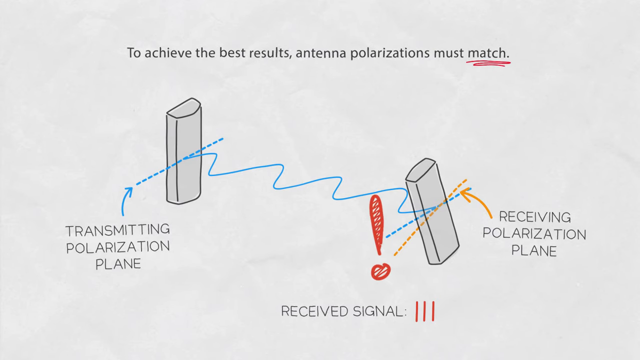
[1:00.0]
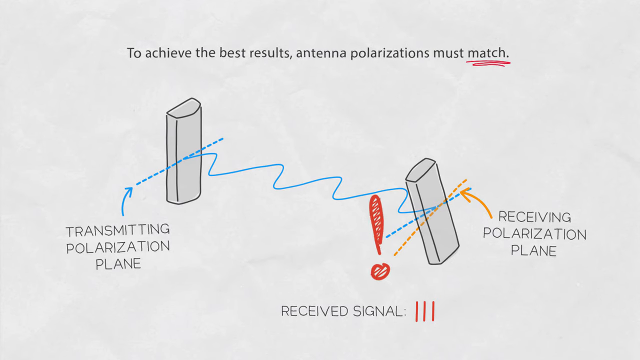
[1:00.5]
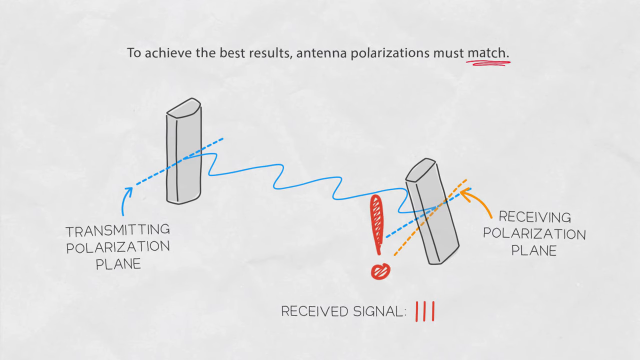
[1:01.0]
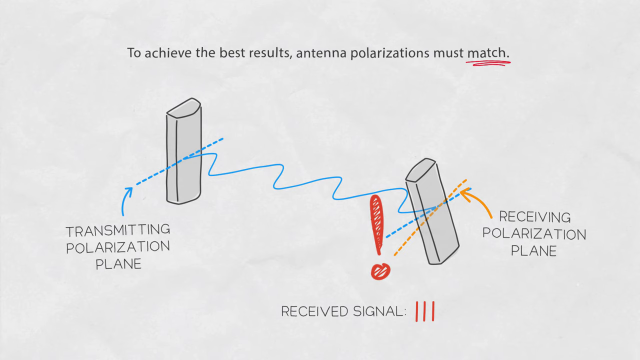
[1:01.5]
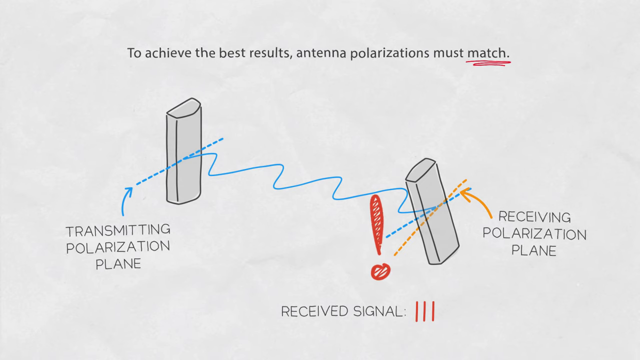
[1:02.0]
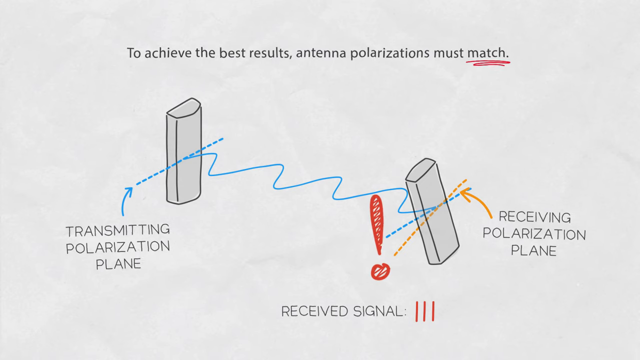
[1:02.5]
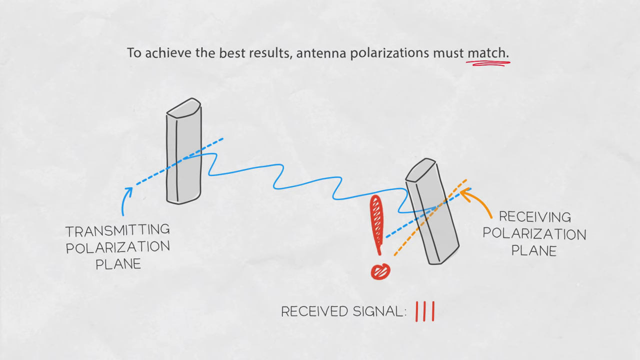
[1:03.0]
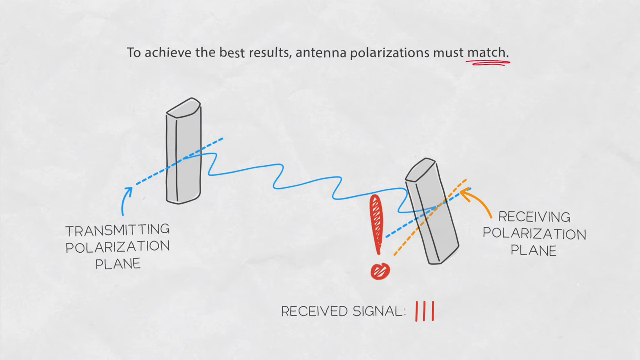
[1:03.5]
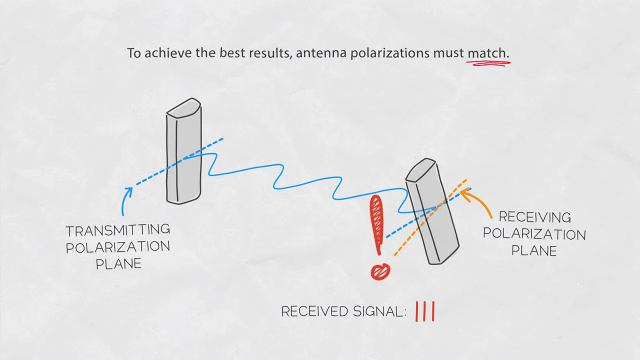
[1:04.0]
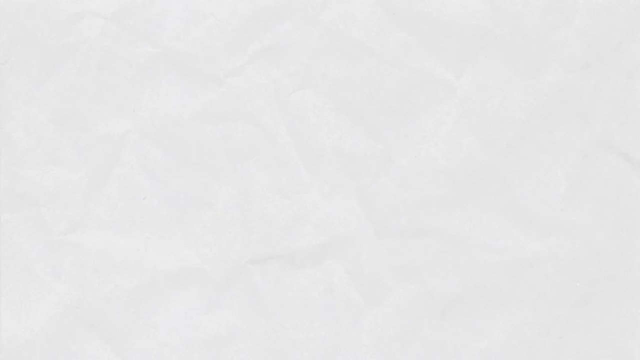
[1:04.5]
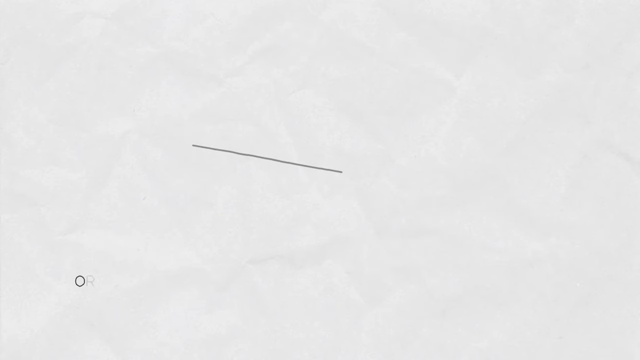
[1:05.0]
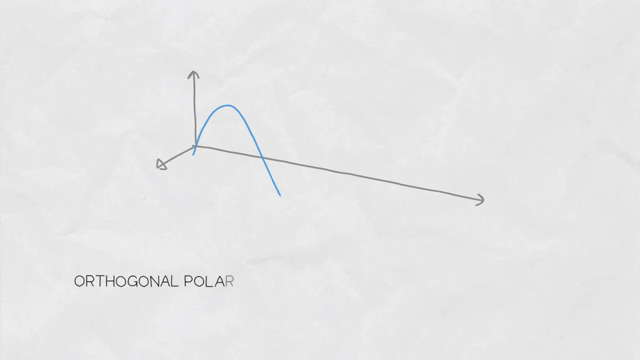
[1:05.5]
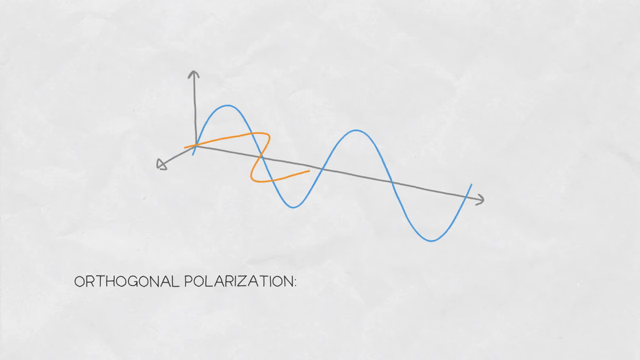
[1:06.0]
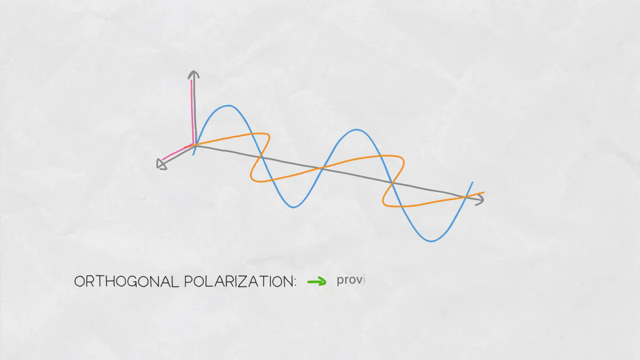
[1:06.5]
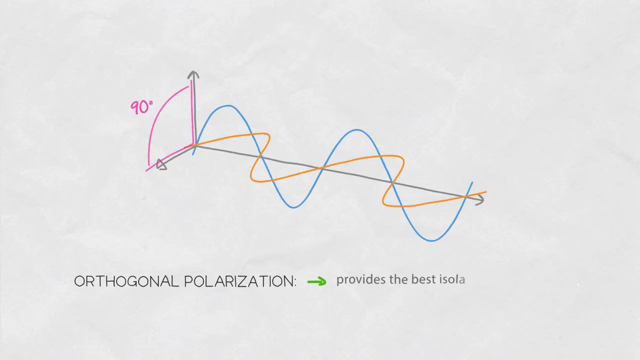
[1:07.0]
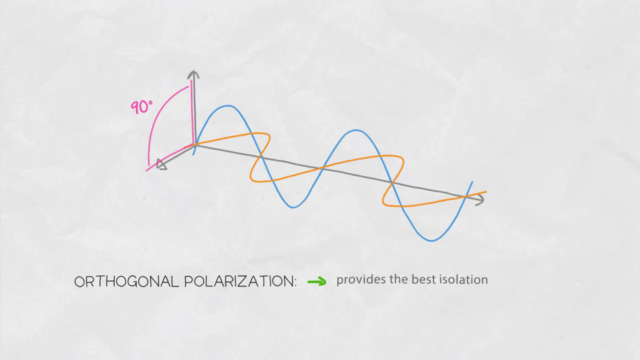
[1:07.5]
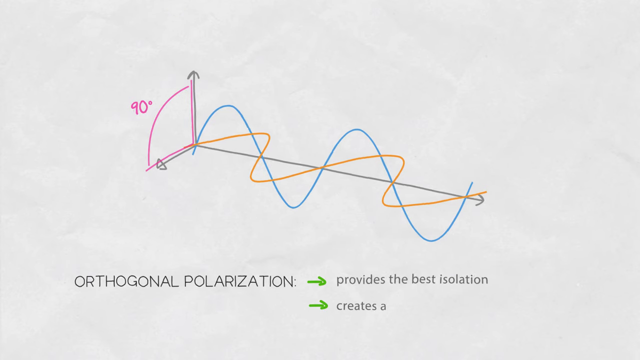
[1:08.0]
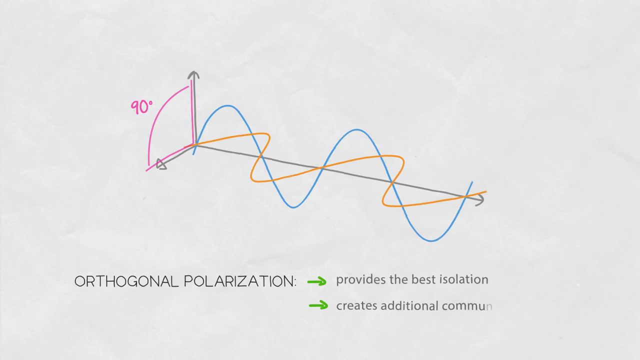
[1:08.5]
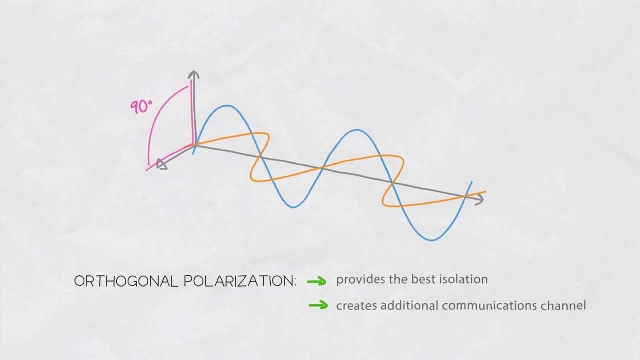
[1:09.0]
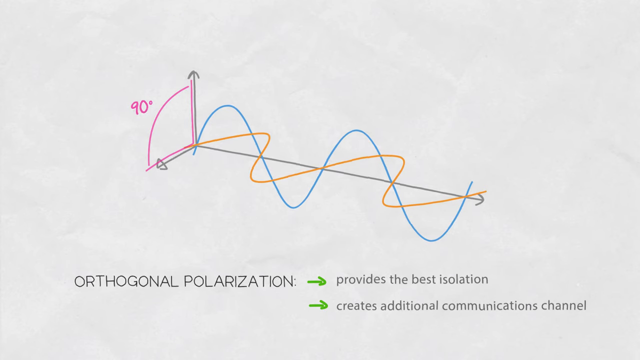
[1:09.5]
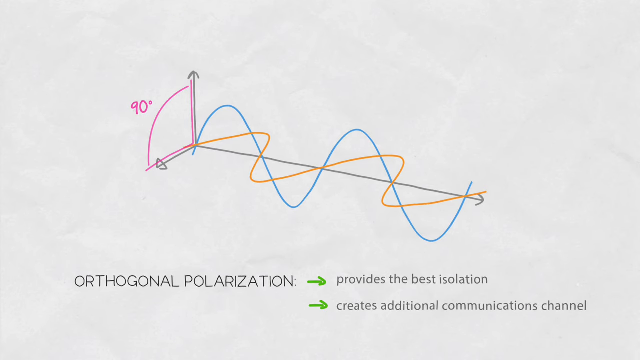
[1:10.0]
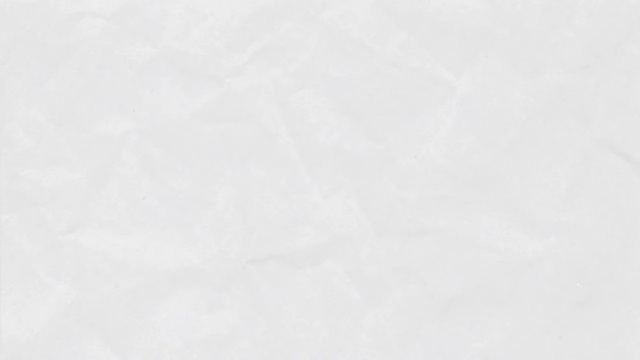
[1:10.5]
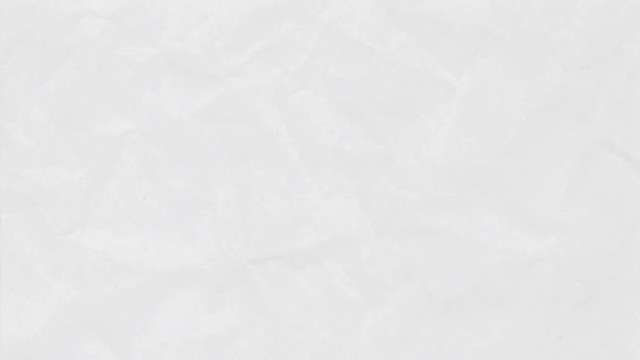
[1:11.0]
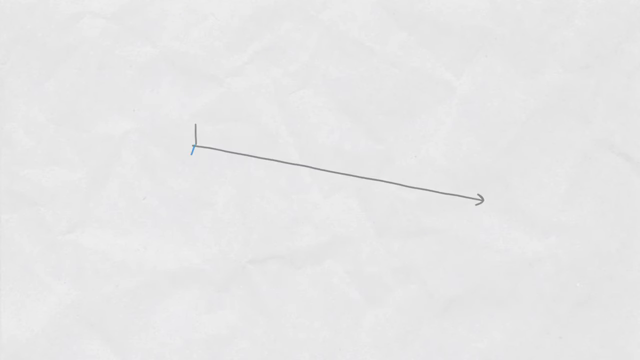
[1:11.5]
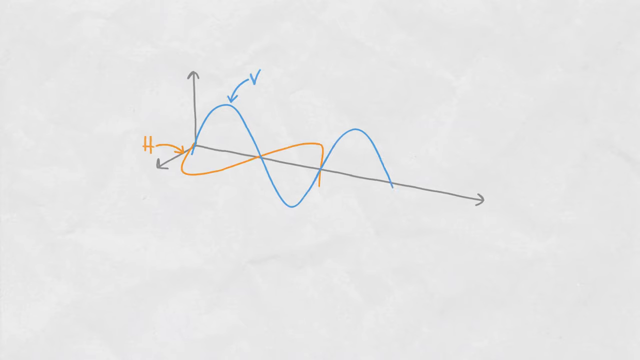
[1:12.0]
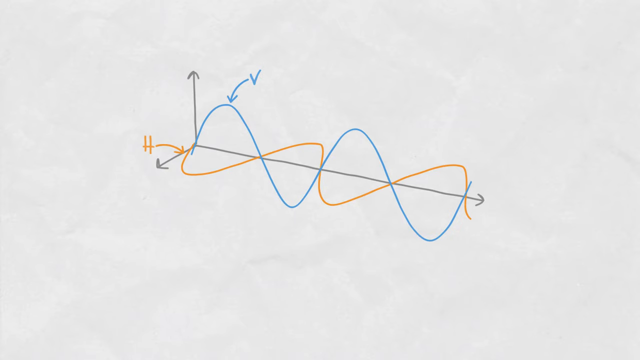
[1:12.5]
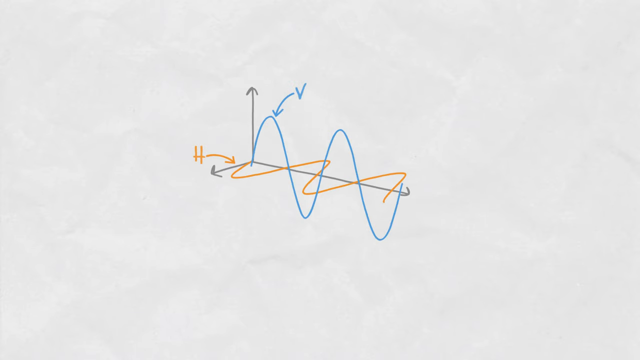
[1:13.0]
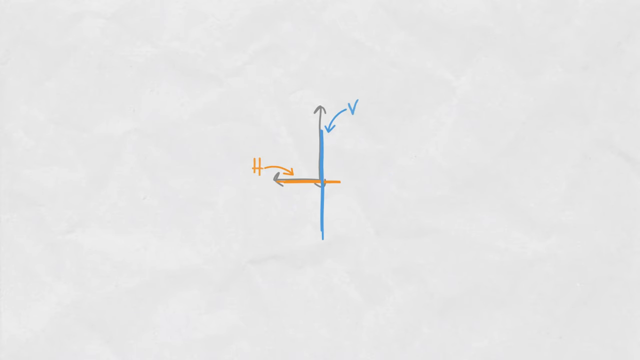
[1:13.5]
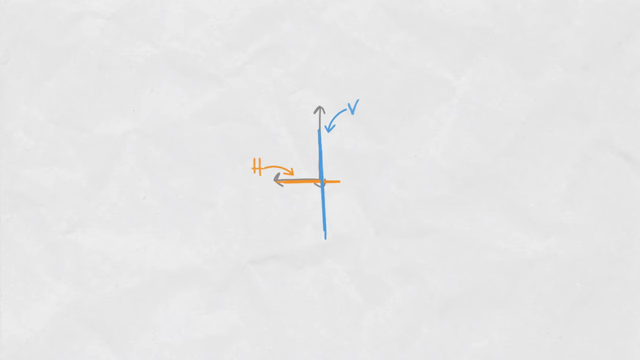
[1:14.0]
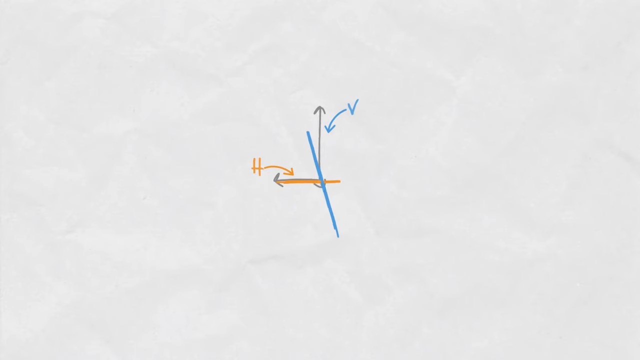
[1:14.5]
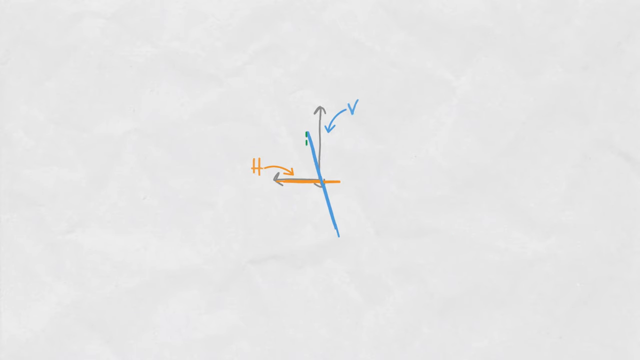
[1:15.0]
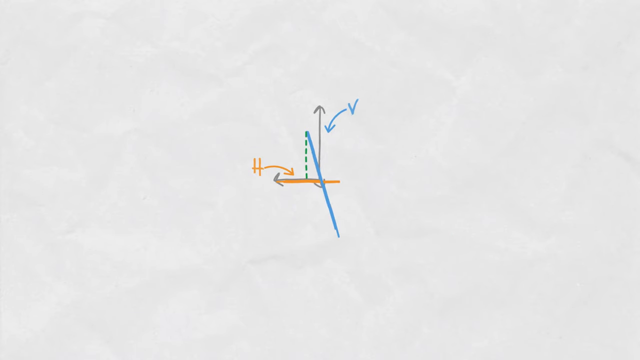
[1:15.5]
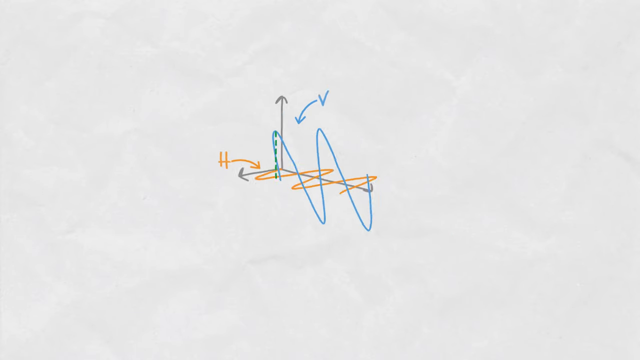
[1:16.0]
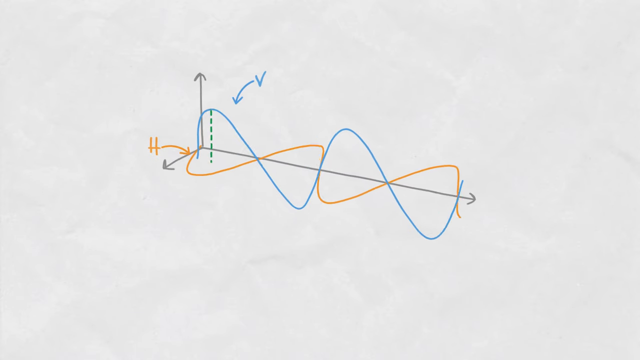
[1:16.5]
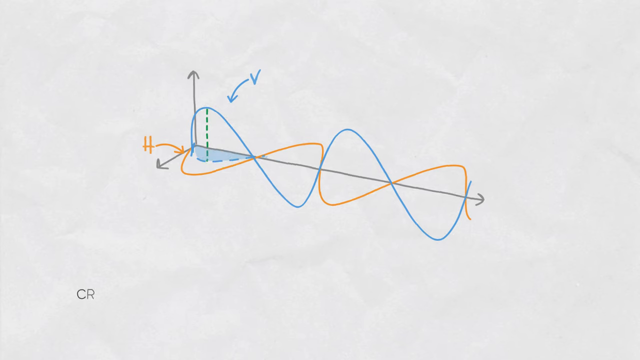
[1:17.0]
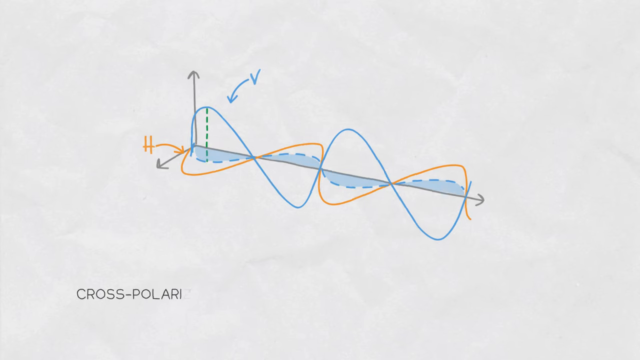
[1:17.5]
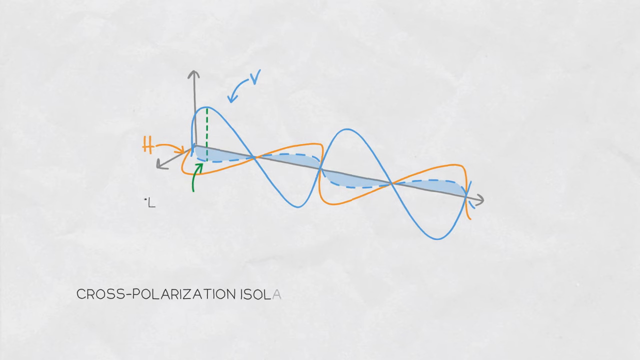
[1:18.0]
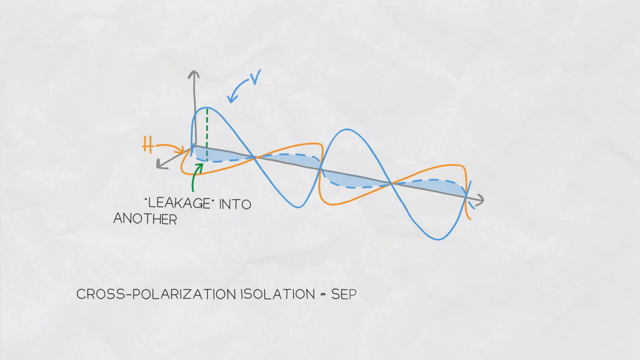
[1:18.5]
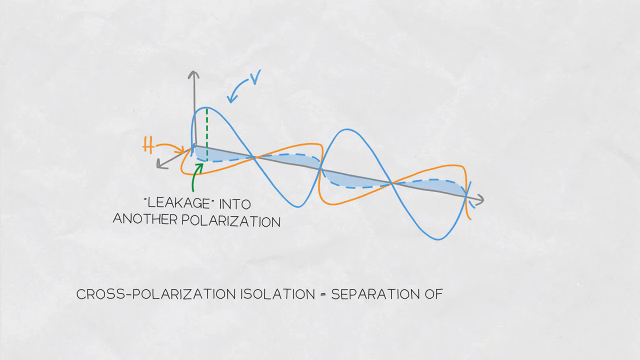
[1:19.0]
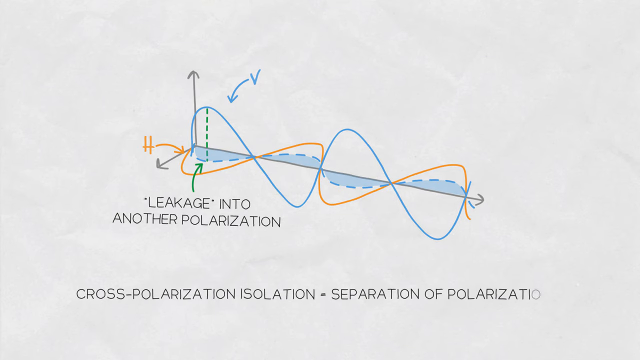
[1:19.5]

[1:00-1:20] The diagram with the text "to achieve the best results antenna polarizations must match" is shown, followed by more diagrams about polarization. A diagram of orthogonal polarization appears with text underneath reading "orthogonal polarization provides best solution and creates additional communication." Another diagram shows horizontal and vertical lines, with text underneath reading "leakage into another polarization," "cross polarization isolation" and "separation of polarization." Another diagram shows the best results, where the diagrams have to match, and the diagrams continue with information below them.